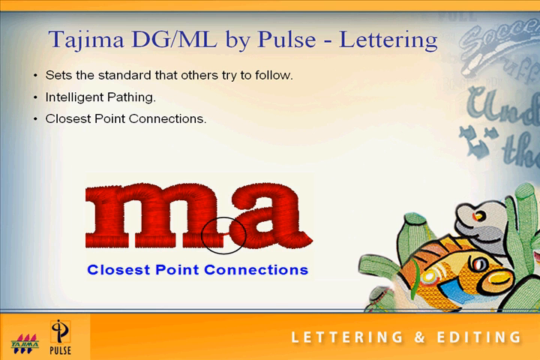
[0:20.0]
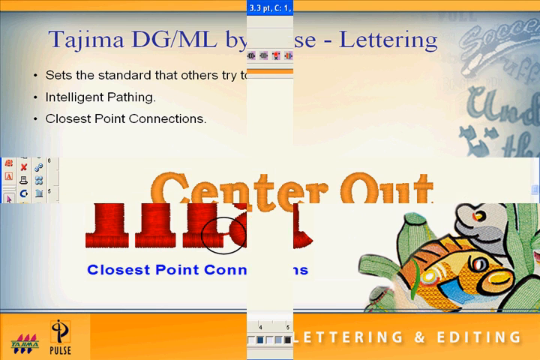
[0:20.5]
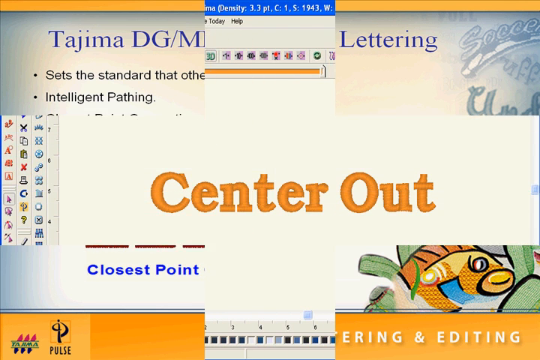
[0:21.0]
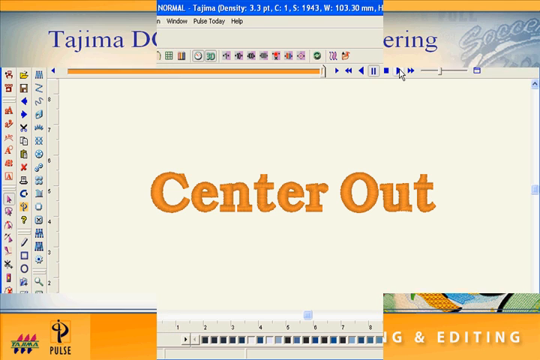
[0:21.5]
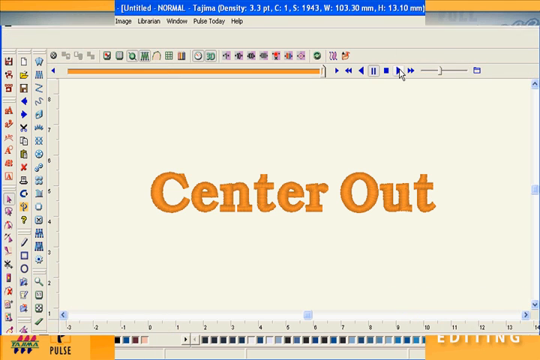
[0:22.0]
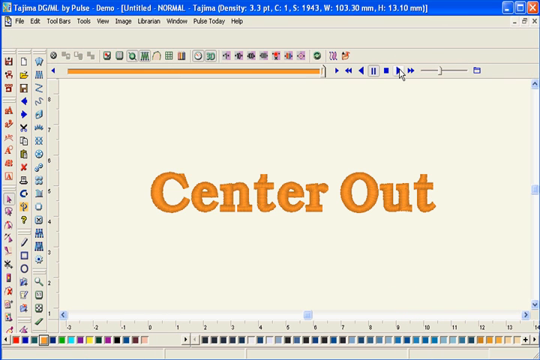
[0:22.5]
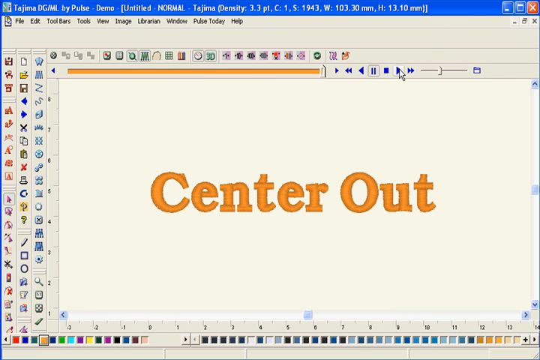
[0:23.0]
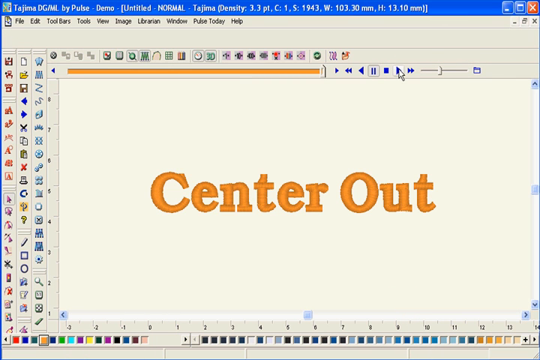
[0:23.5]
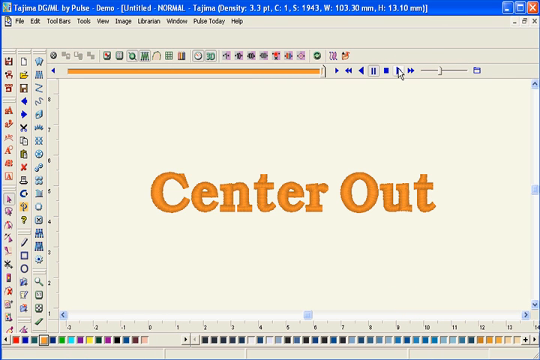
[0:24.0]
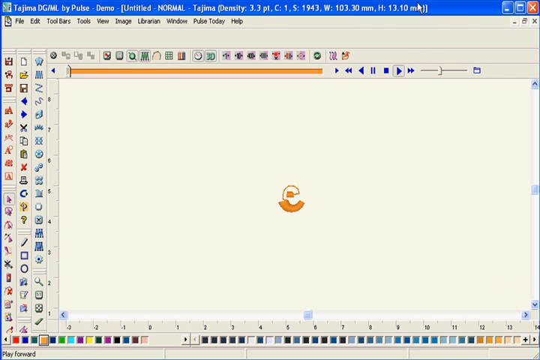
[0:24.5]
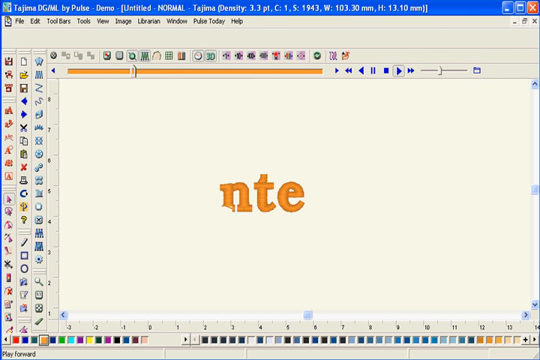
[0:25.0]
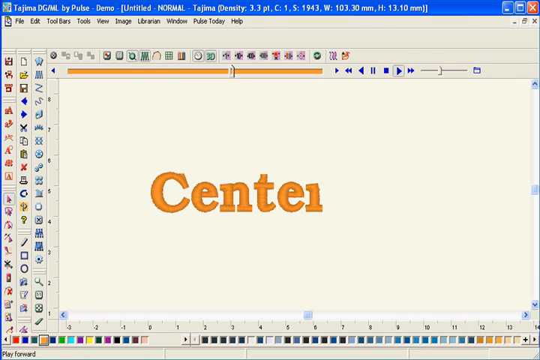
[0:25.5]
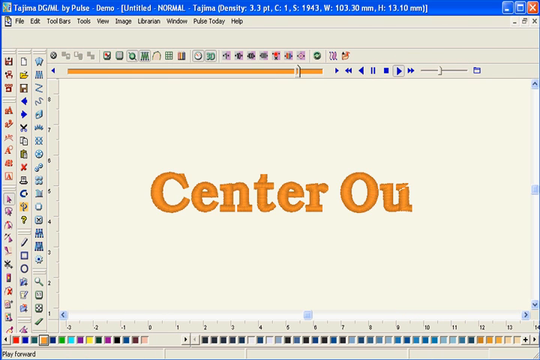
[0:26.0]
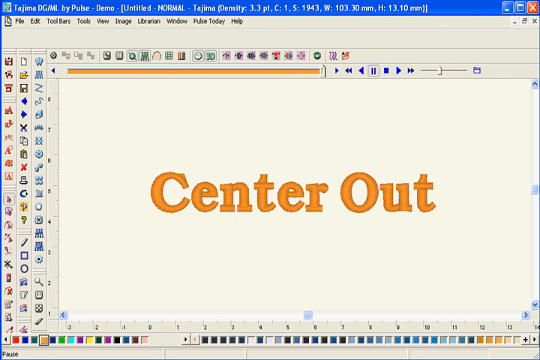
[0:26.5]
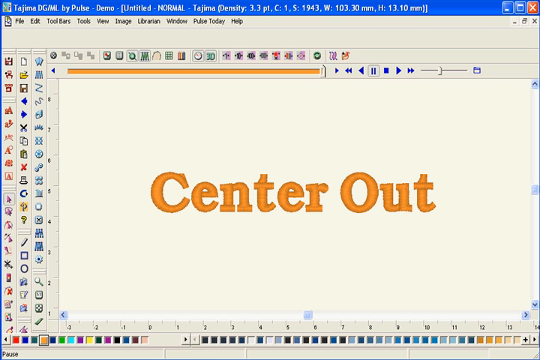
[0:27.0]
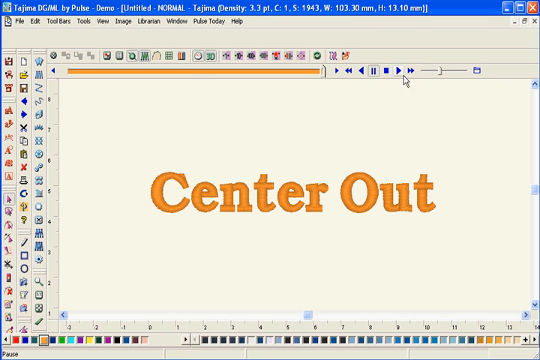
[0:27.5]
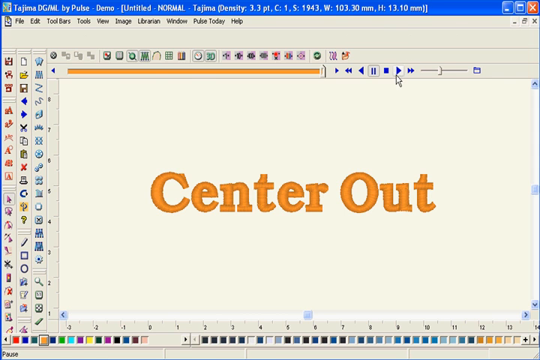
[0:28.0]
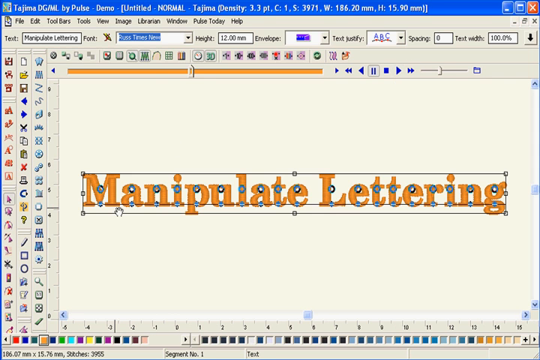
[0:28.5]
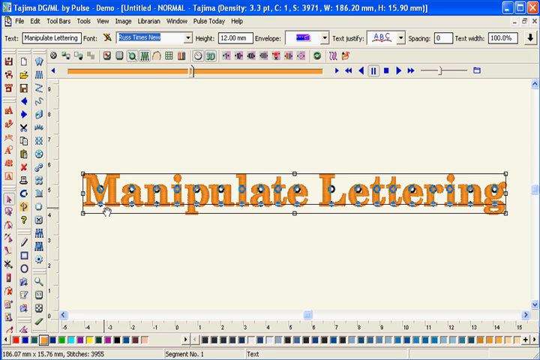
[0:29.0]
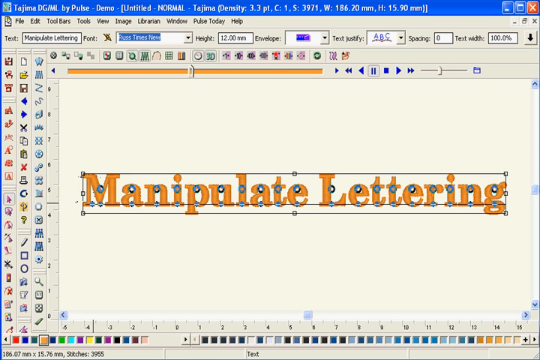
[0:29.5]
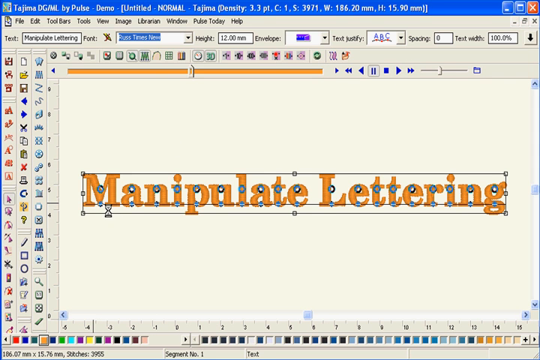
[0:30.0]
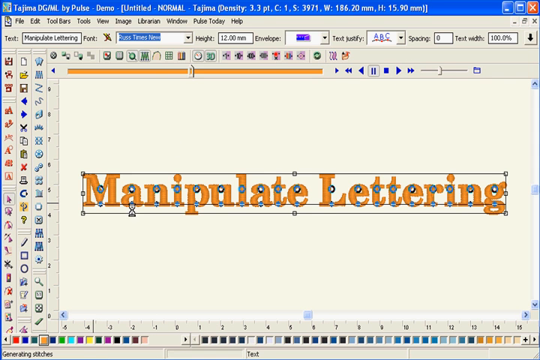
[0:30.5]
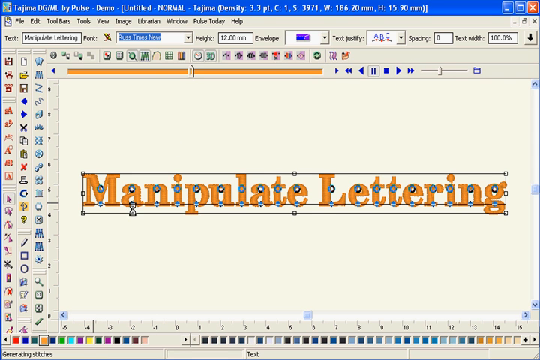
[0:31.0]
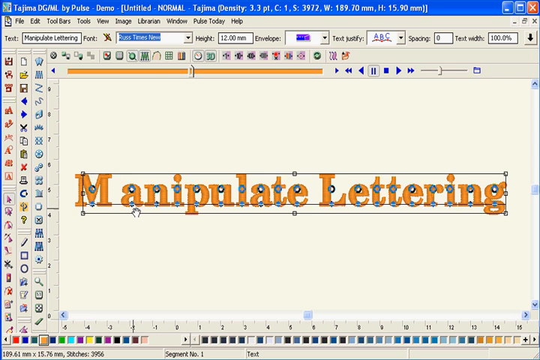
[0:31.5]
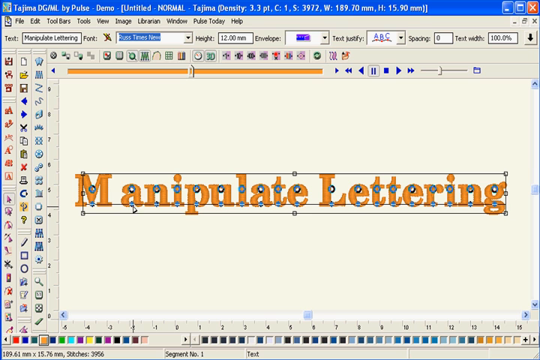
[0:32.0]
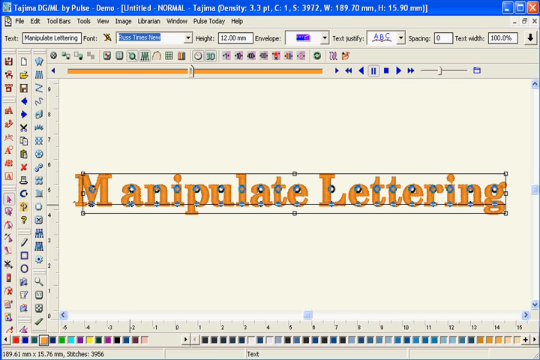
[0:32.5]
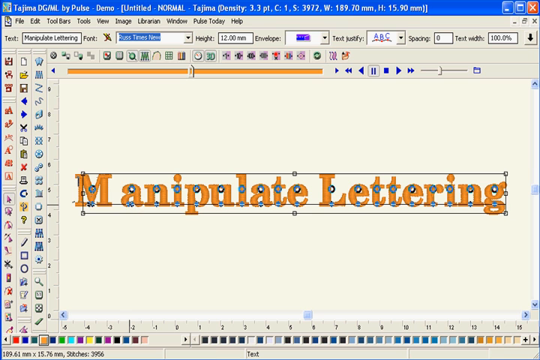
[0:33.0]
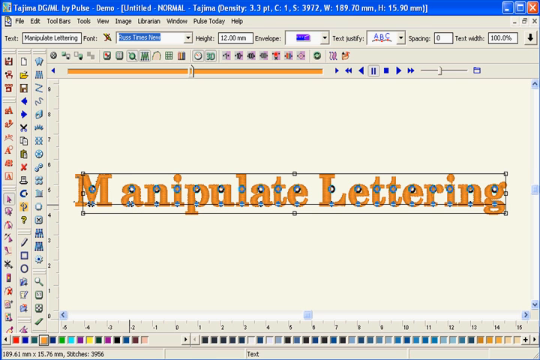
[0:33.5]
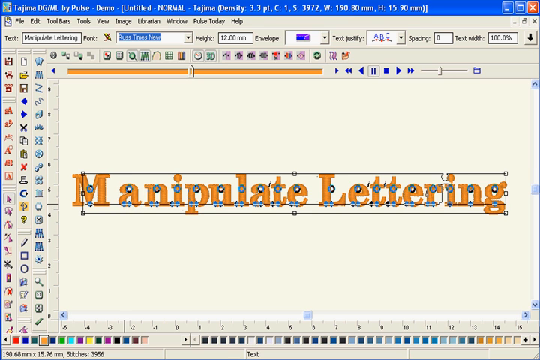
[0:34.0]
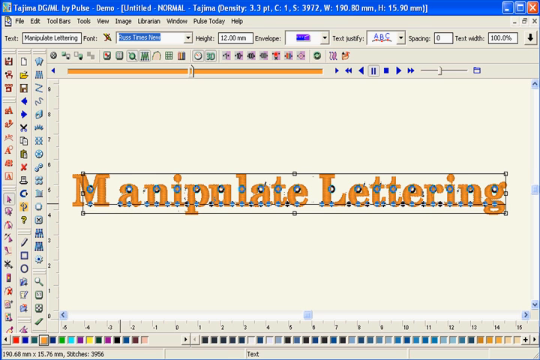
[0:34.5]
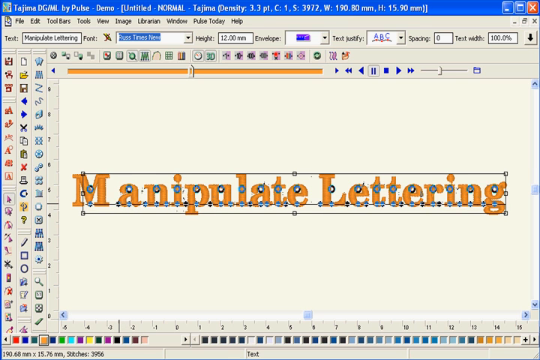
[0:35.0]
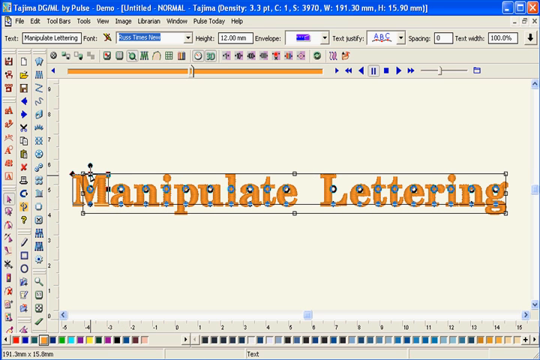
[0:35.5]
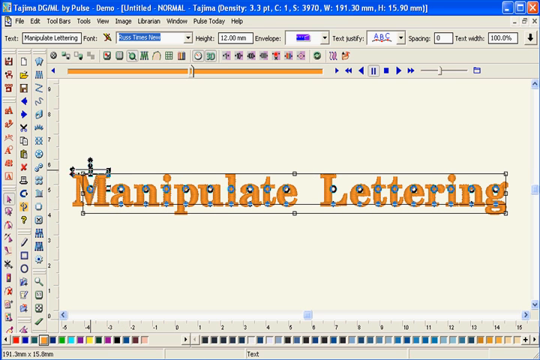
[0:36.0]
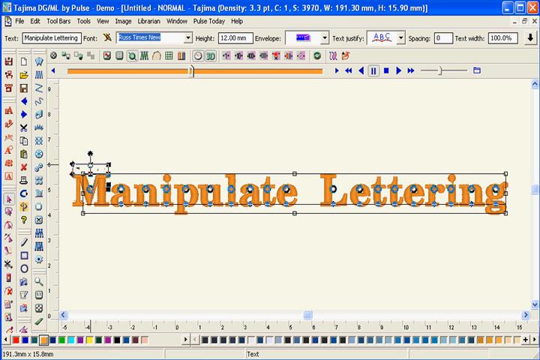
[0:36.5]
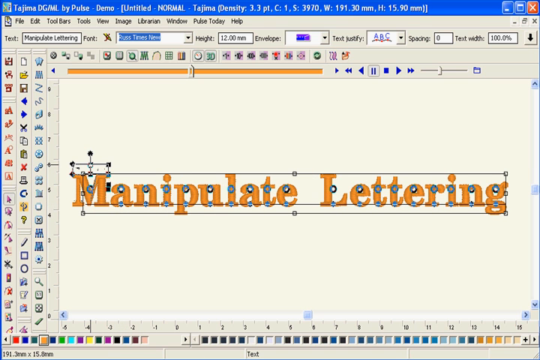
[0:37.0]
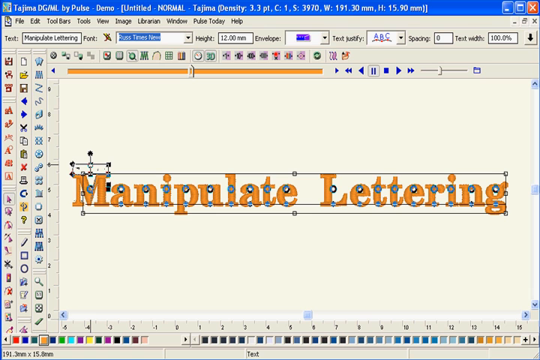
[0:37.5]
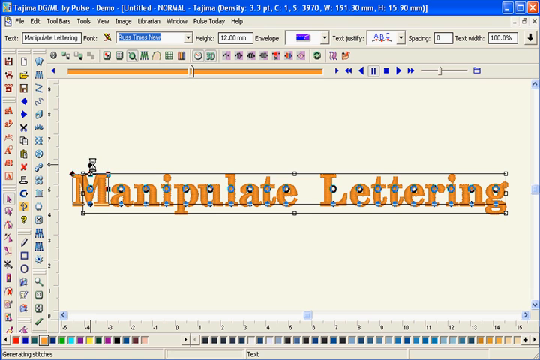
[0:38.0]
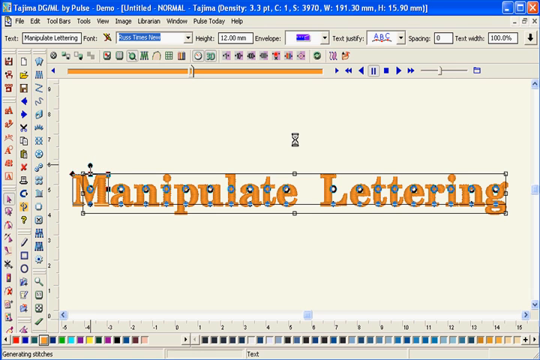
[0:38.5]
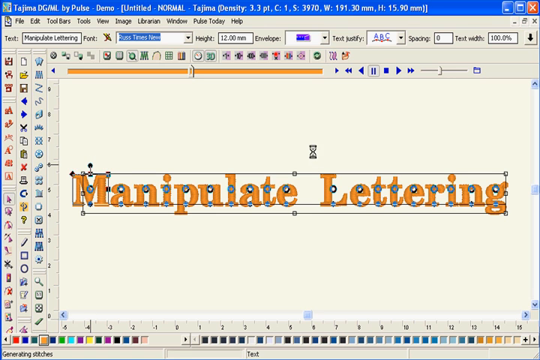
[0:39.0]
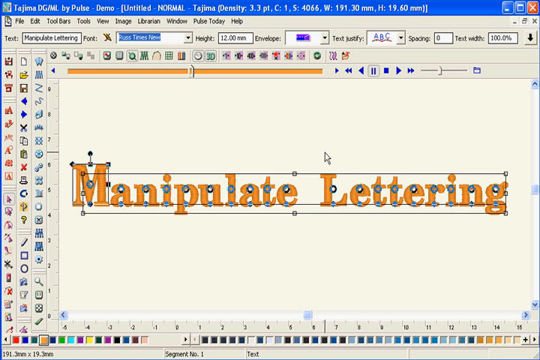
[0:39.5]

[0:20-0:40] The front page reads "Tajama DG/ML by Pulse Lettering," along with "sets the standard that others try to follow," "intelligent pathing," and "closest point connection." A circle is drawn around an embroidered M next to an A, showing the tiny area where they connect; the connection is barely visible. Next, "center out" appears in orange, and a demonstration shows stitching that starts at the center and moves outward. Then the text "manipulate lettering" appears, and some of the letters are moved, either closer together or farther apart, widening the space between the M and the A. Various adjustments are made to the letters in what appears to be a working space for adjusting how the letters are stitched. At the top of the page, a blue rectangle still reads "Tajama DG/ML by Pulse demo."